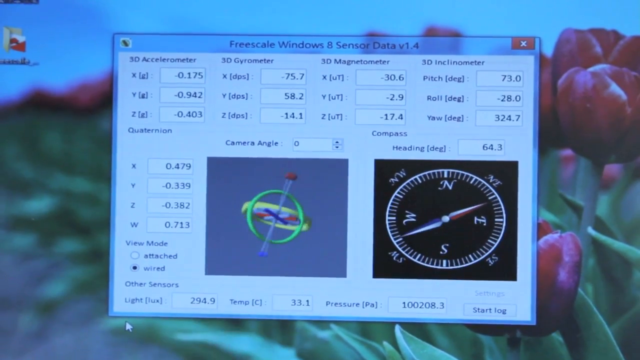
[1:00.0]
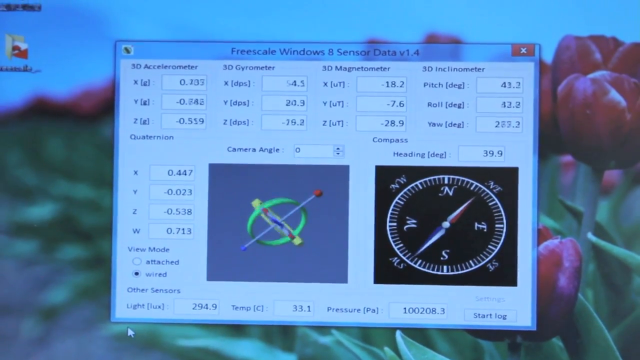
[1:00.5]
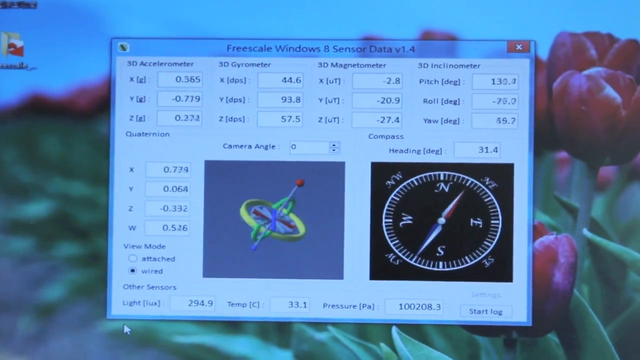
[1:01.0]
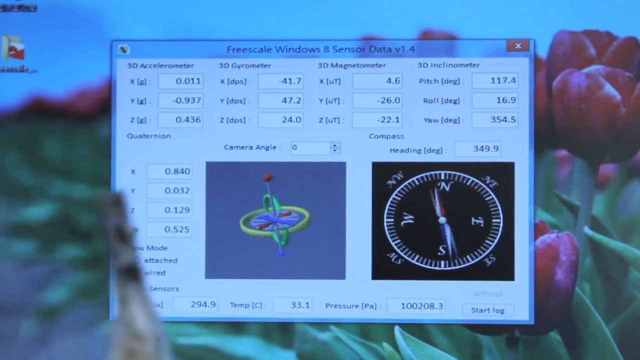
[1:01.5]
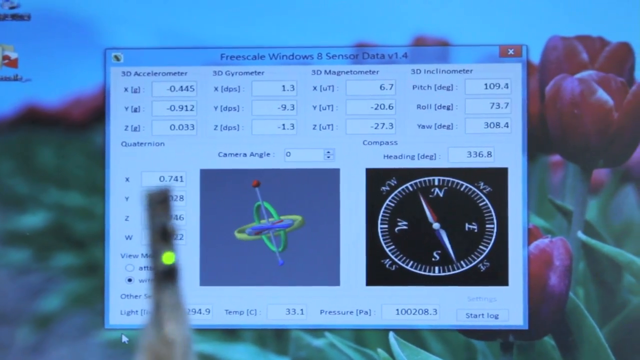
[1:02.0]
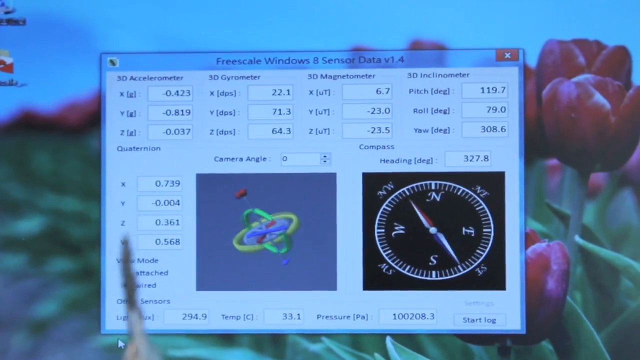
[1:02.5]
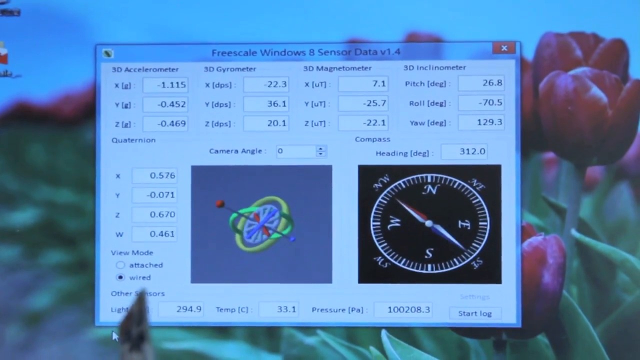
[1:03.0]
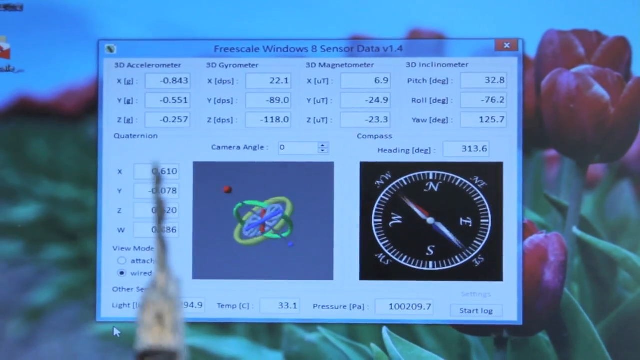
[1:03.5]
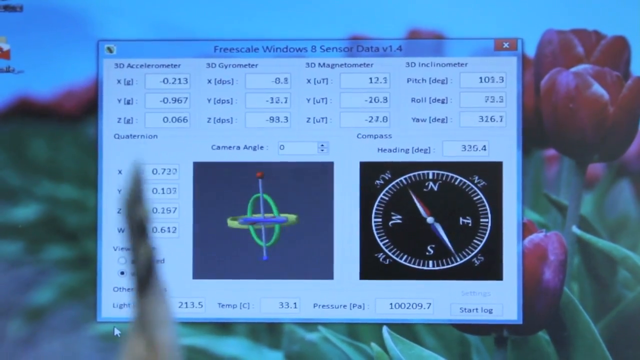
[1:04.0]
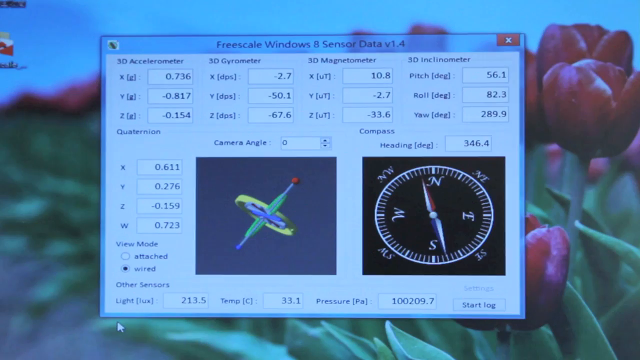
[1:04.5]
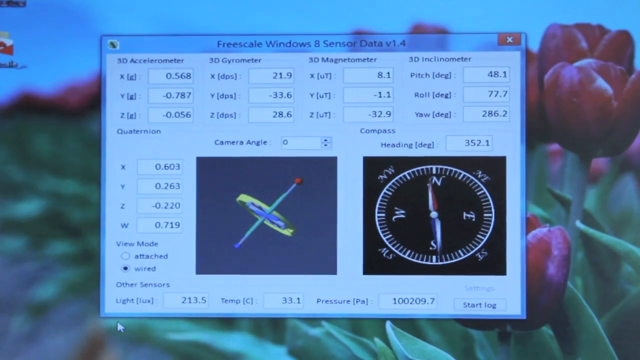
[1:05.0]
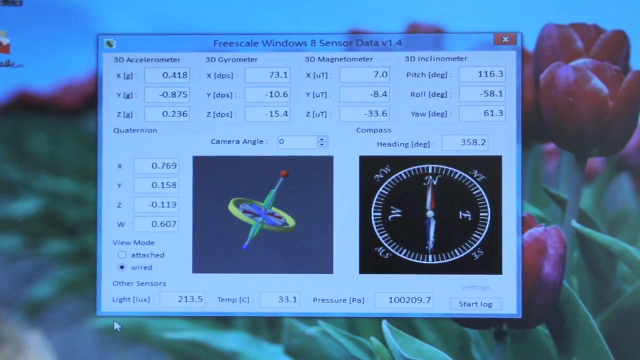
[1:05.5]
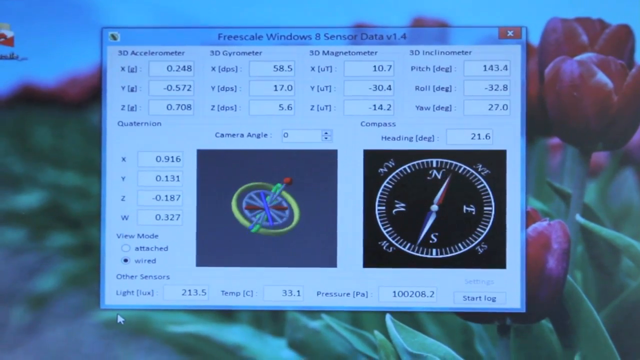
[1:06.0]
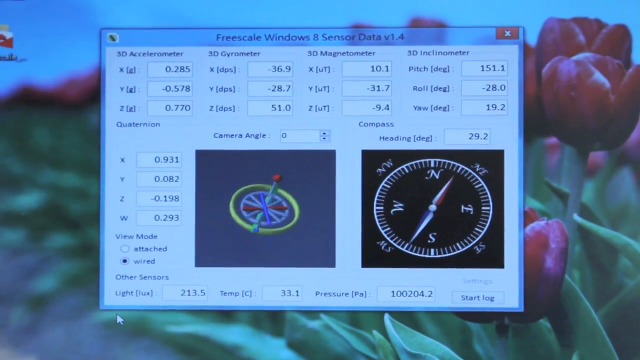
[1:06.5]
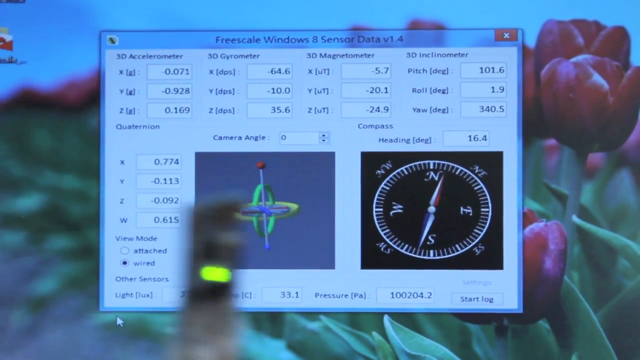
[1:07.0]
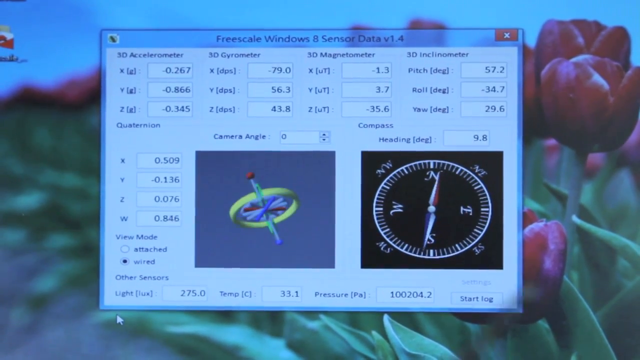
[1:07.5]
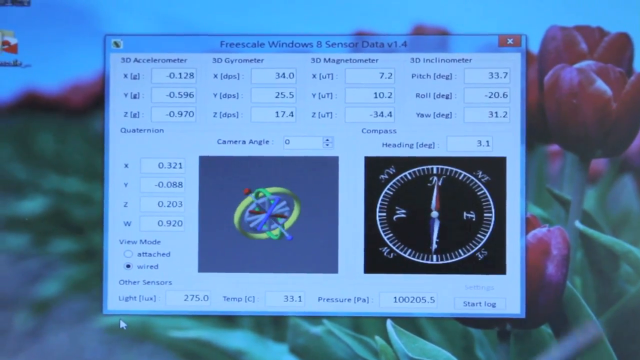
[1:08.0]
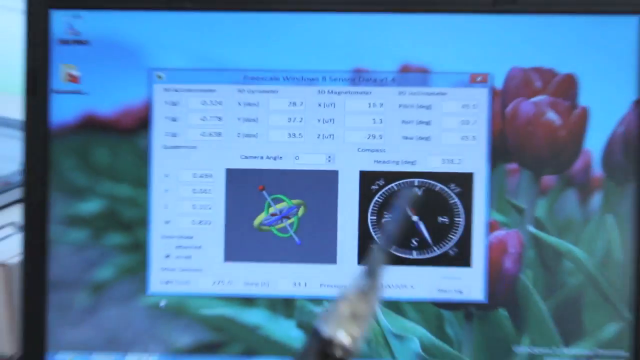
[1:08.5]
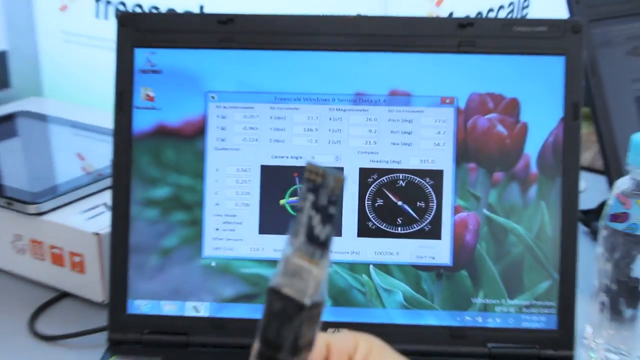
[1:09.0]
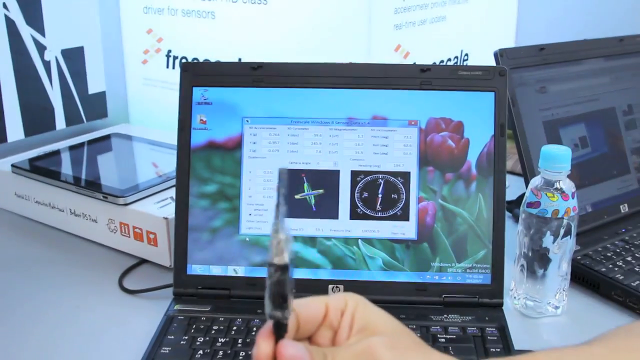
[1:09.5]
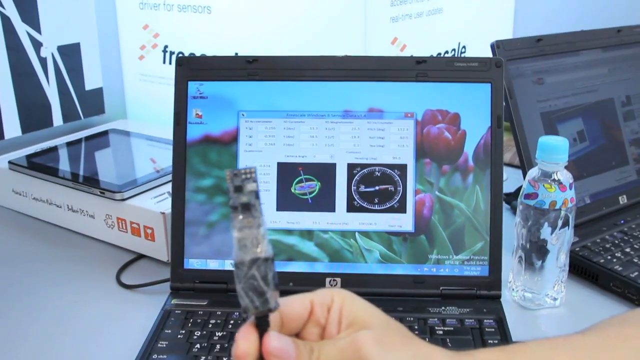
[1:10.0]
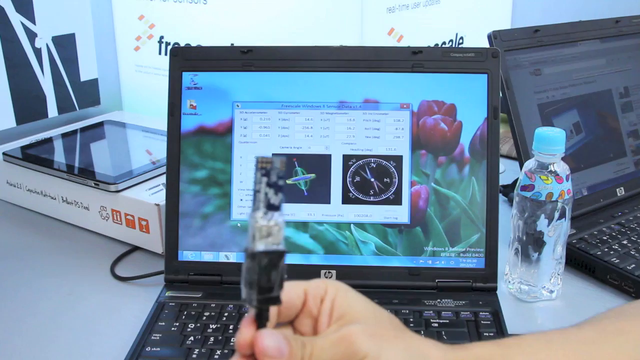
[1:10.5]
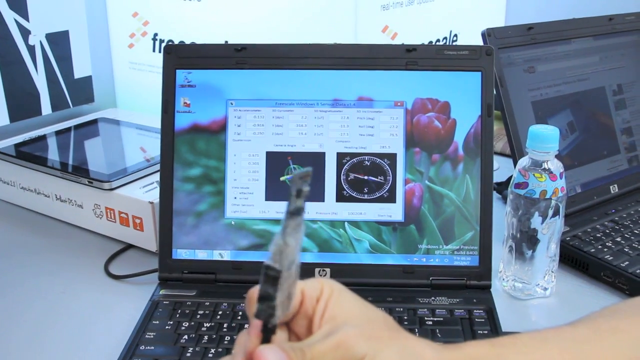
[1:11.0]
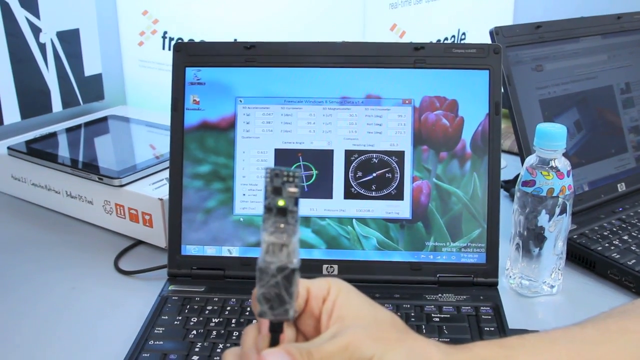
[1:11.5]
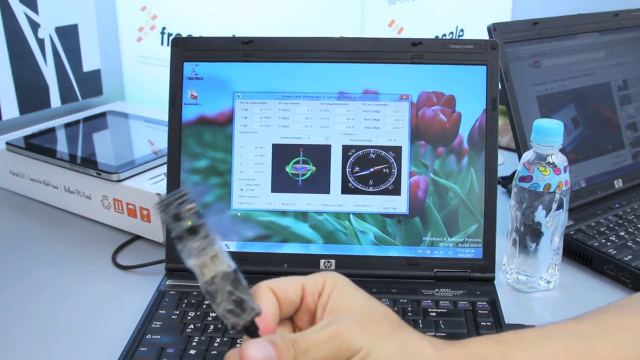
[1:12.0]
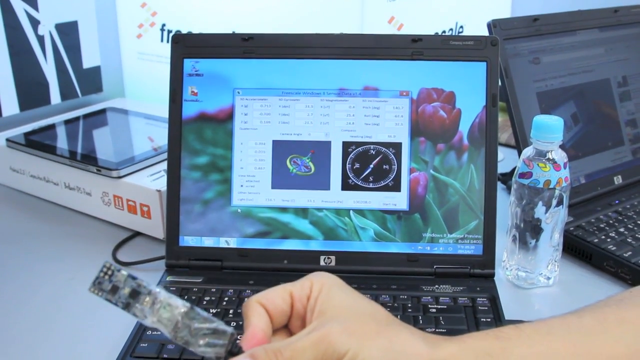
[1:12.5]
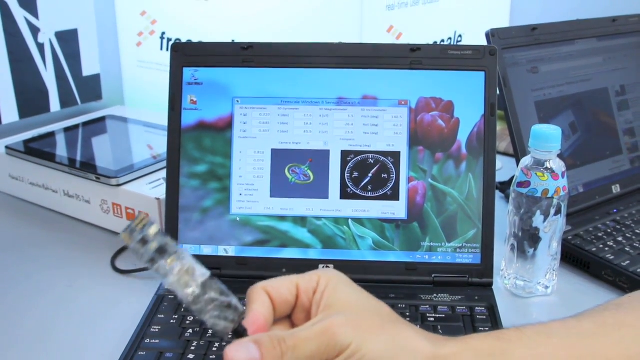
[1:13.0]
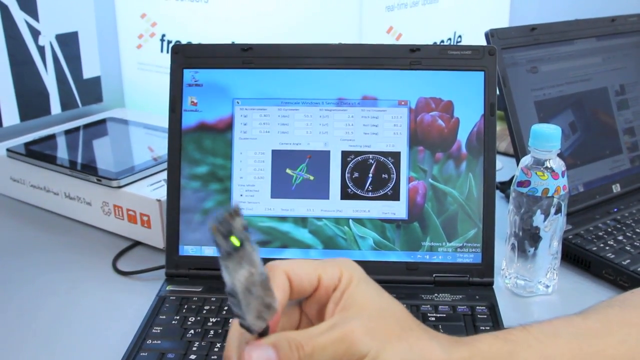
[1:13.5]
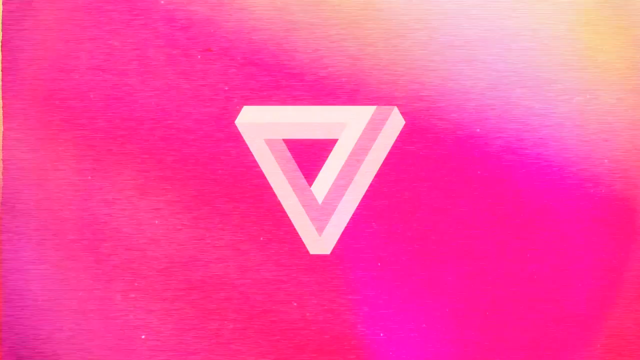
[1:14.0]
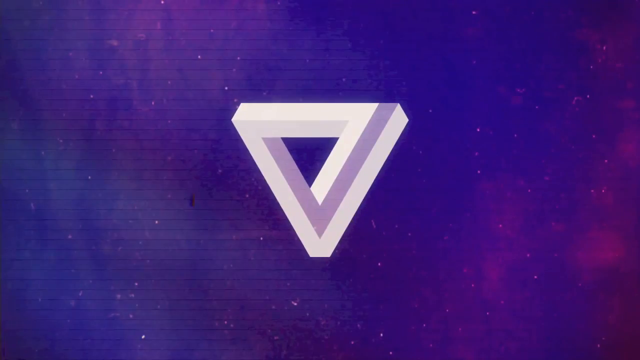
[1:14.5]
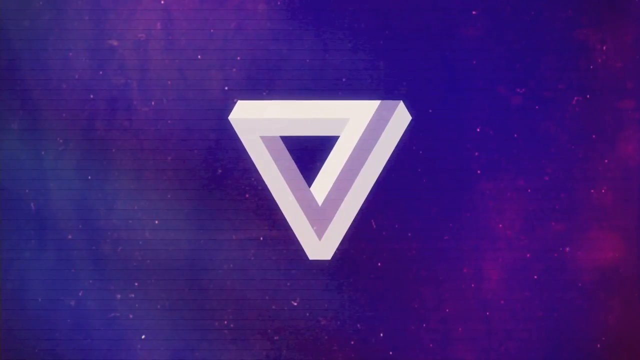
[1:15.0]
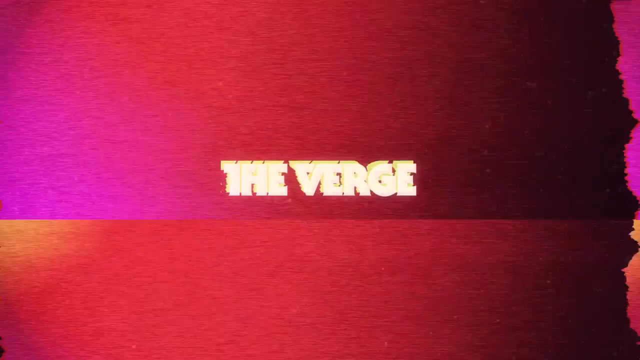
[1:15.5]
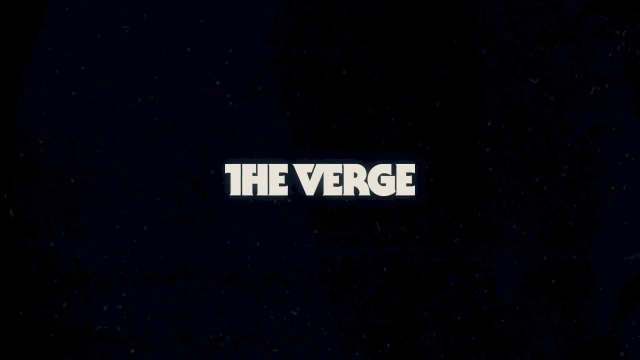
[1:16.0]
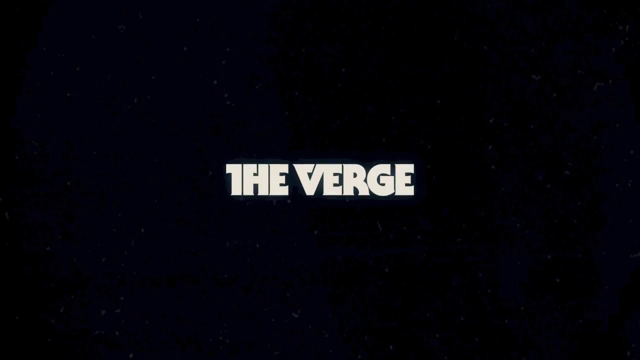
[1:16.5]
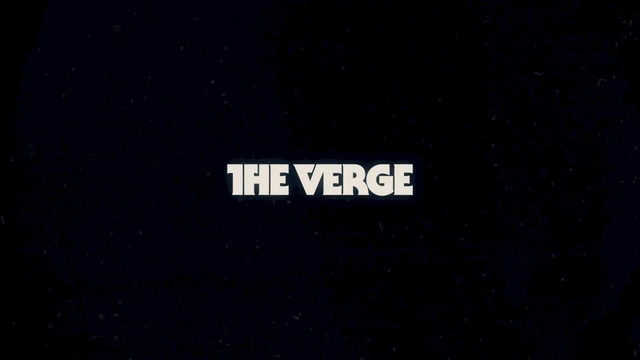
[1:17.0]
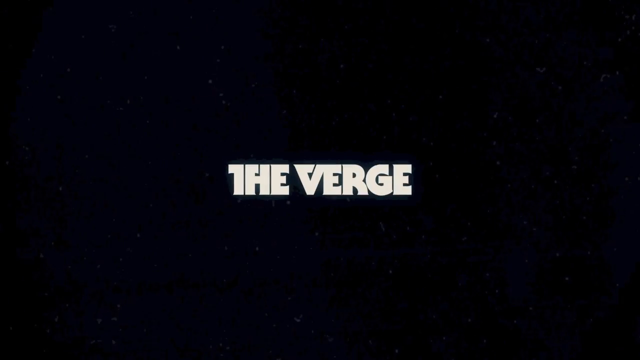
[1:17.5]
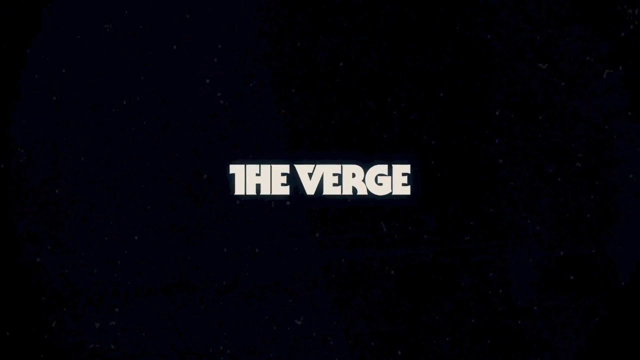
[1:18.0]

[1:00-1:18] The camera is close up on the laptop display, with the window featuring the gyroscope and compass taking up most of the shot. The out-of-focus chip in the foreground is being manipulated off camera until the camera zooms back out, revealing the full chip once again as the man continues to twist, rotate, wave and otherwise move it, with the program tracking its orientation in 3D space. The shot quickly cuts to a purple background with a white triangle, which flashes between pink and white and then black, with the words "The Verge" on the screen in bold.